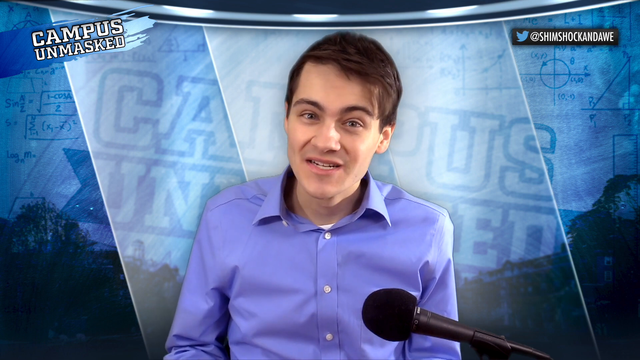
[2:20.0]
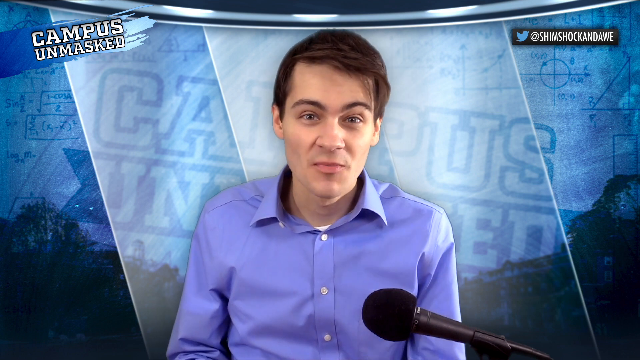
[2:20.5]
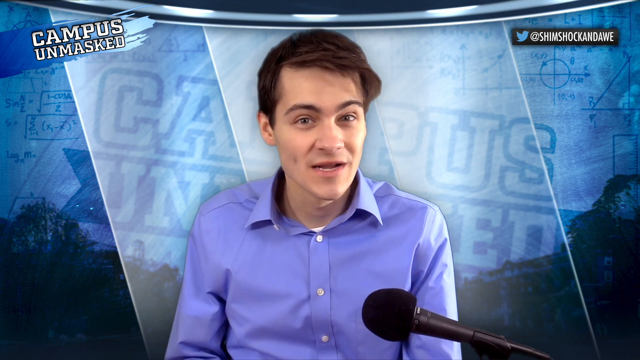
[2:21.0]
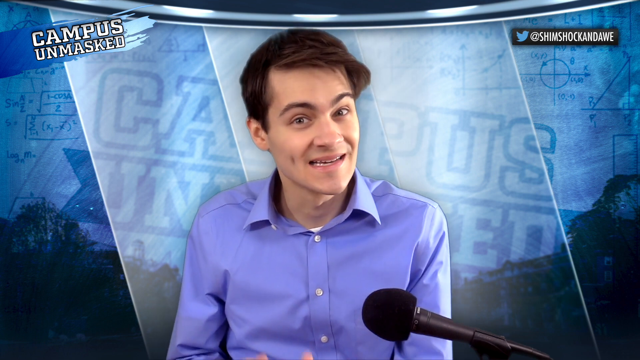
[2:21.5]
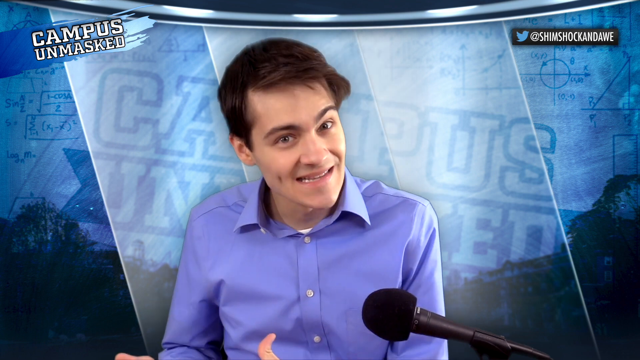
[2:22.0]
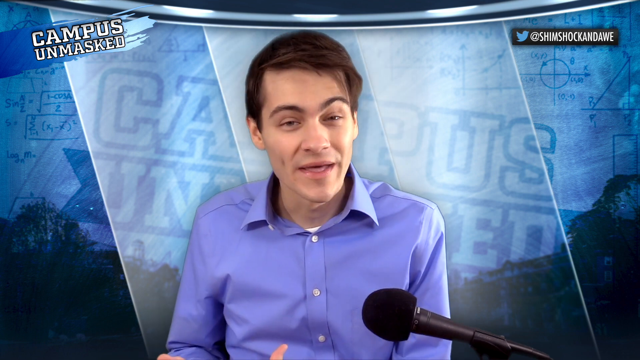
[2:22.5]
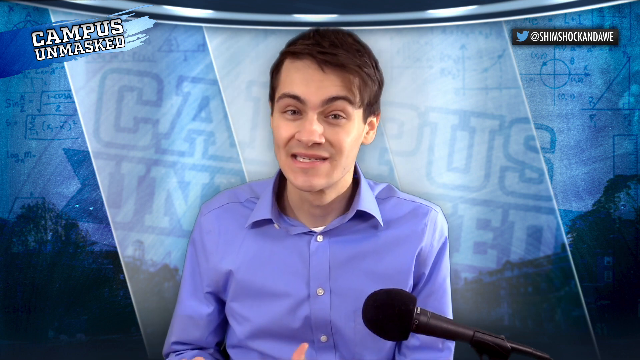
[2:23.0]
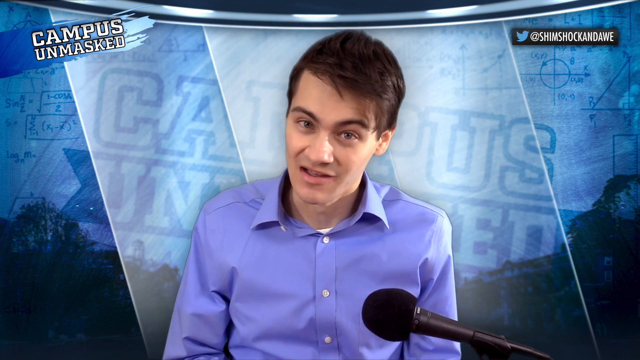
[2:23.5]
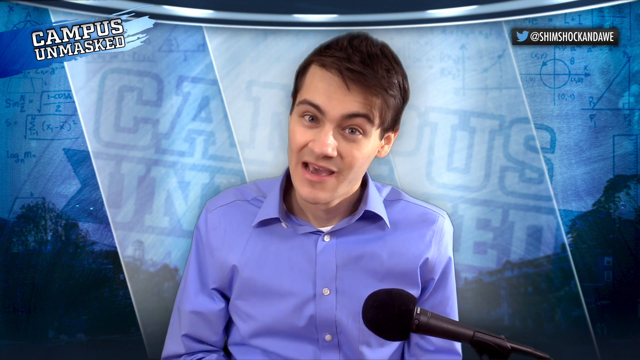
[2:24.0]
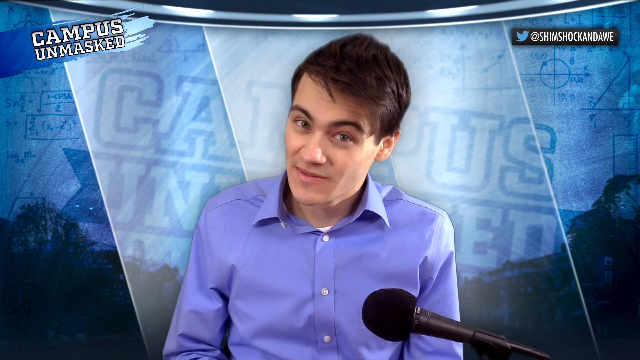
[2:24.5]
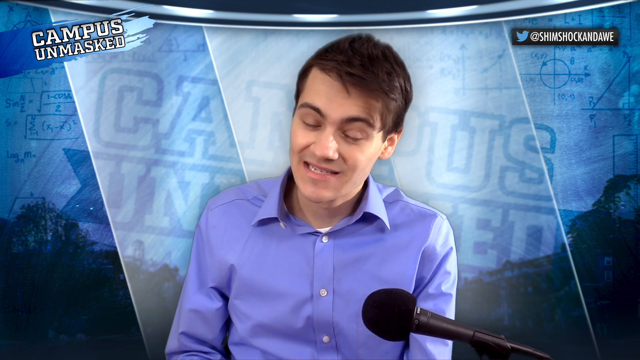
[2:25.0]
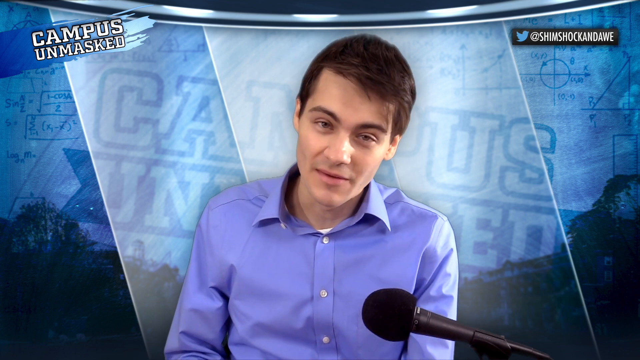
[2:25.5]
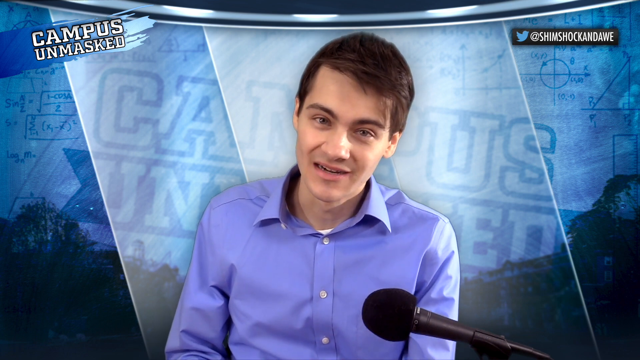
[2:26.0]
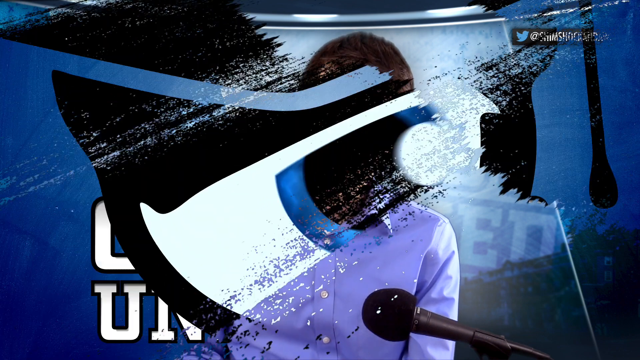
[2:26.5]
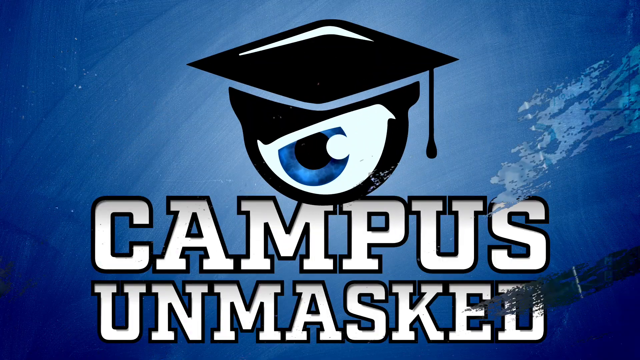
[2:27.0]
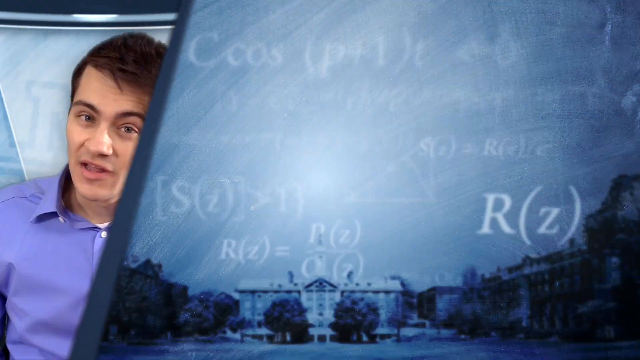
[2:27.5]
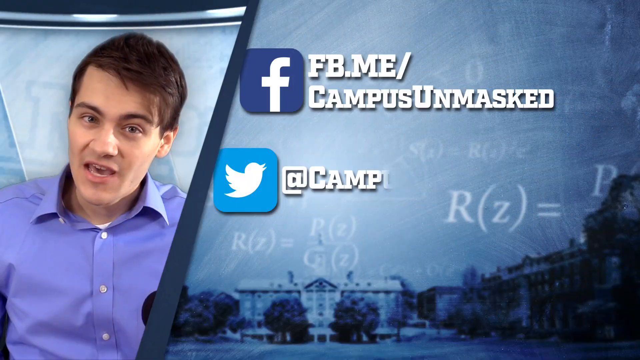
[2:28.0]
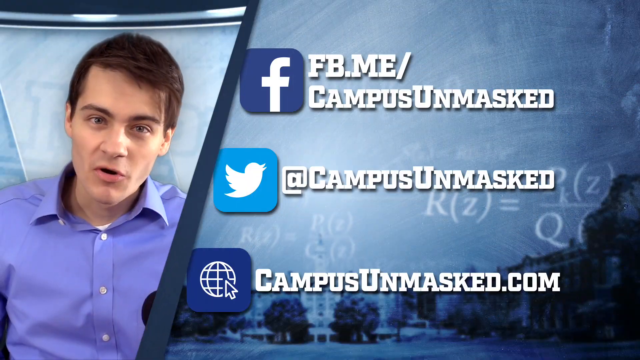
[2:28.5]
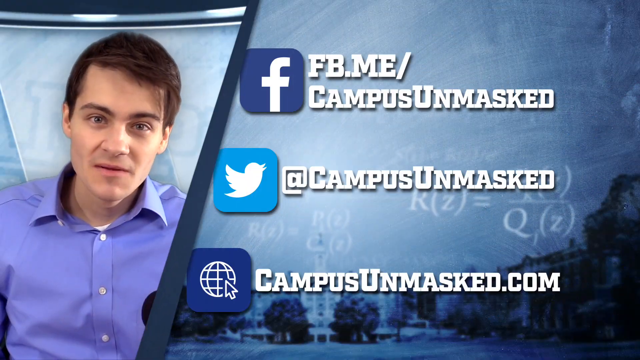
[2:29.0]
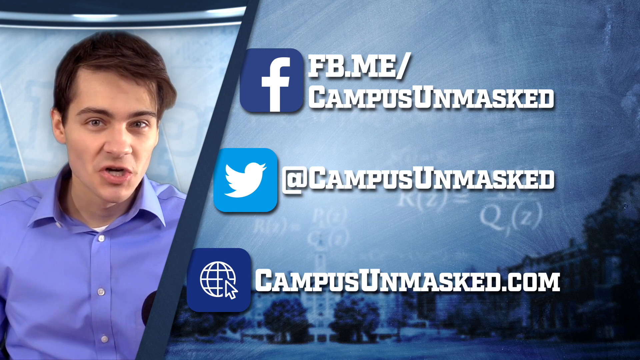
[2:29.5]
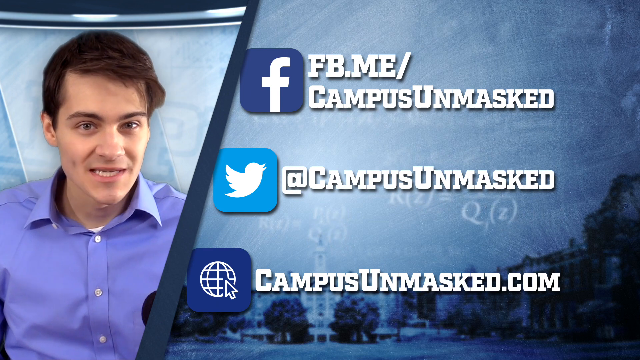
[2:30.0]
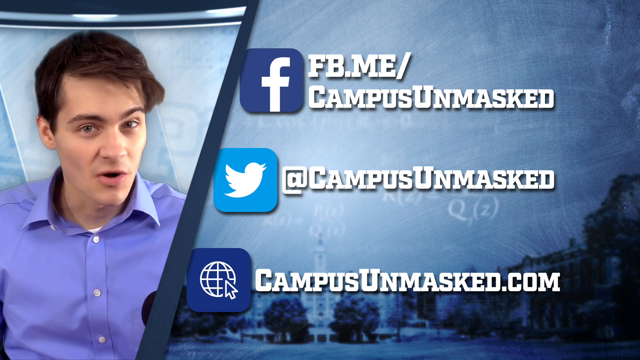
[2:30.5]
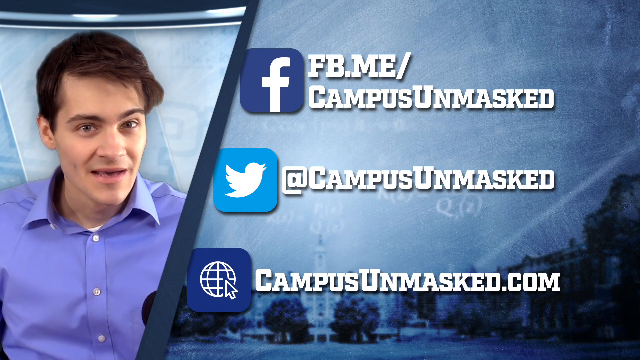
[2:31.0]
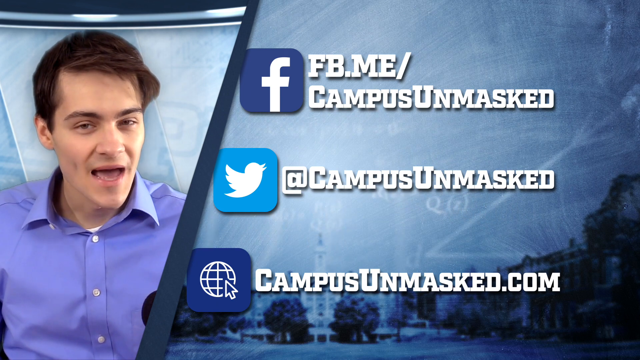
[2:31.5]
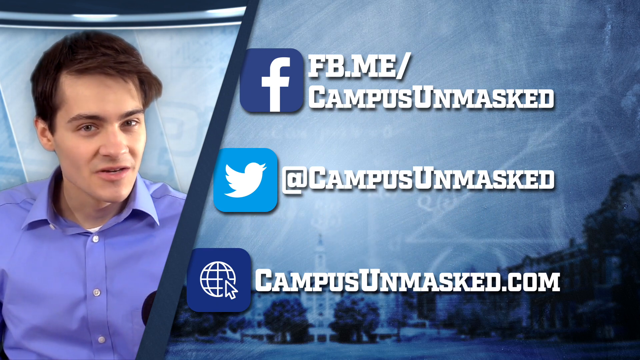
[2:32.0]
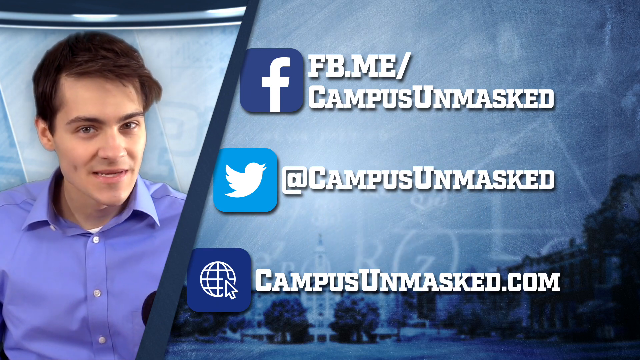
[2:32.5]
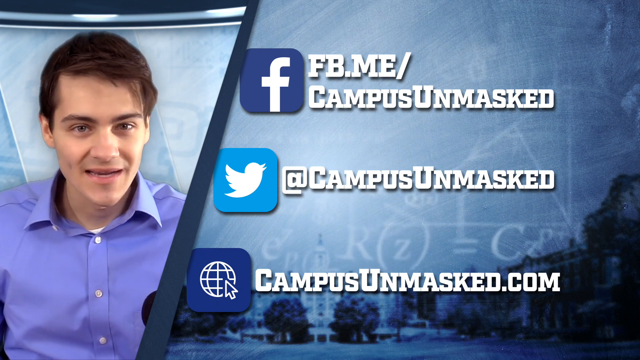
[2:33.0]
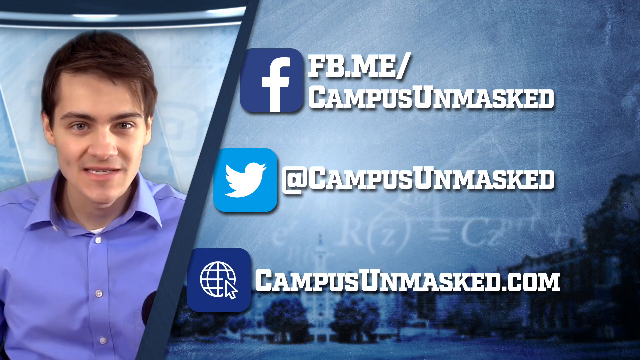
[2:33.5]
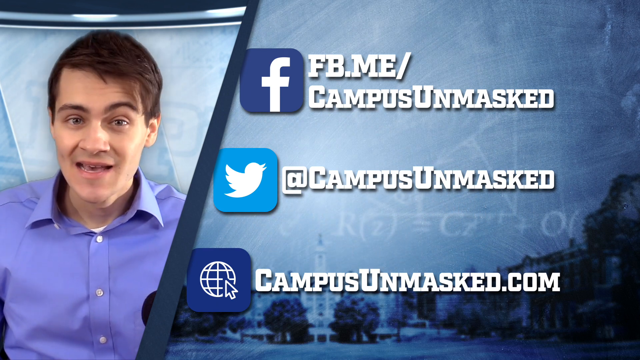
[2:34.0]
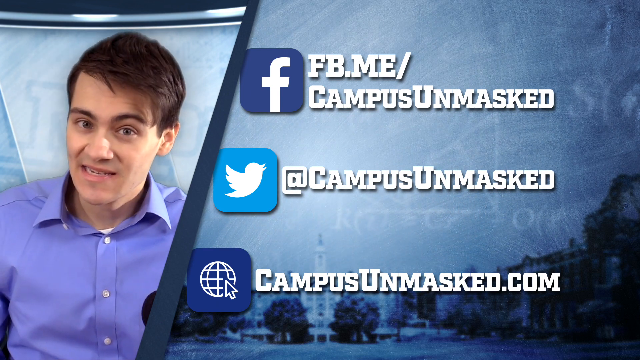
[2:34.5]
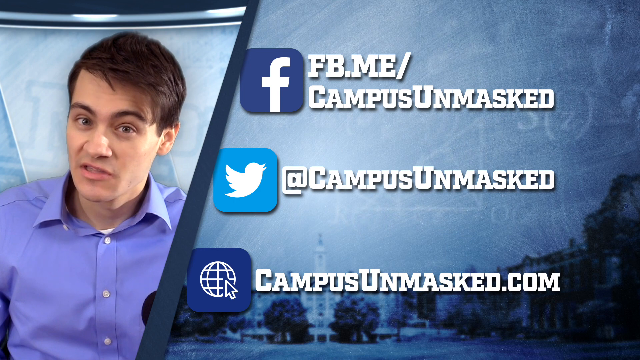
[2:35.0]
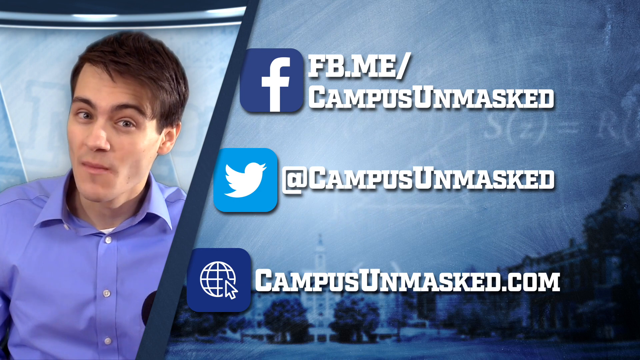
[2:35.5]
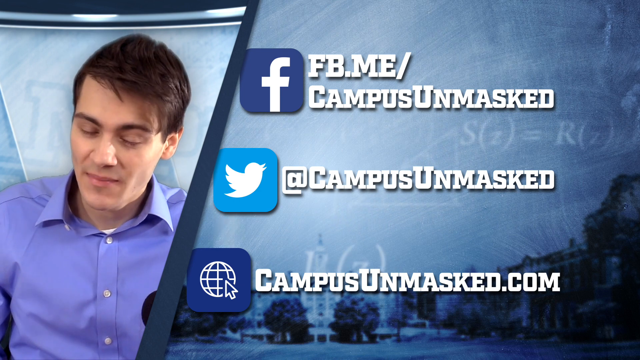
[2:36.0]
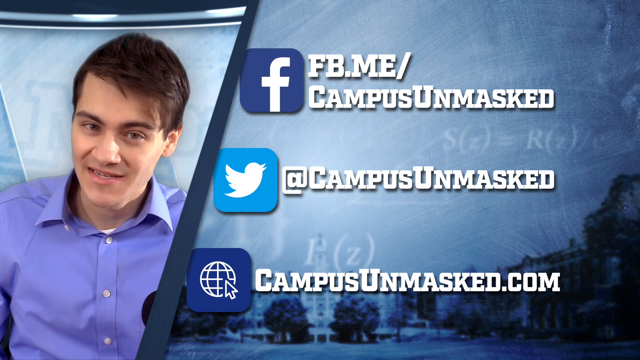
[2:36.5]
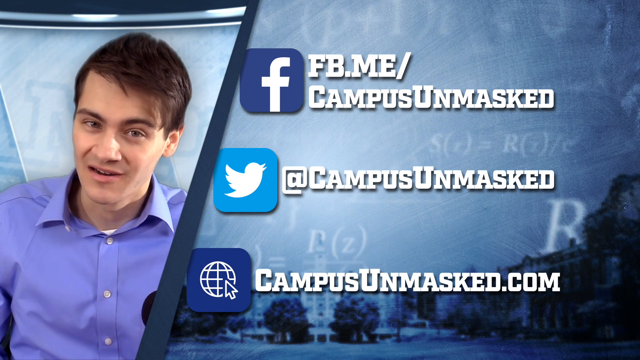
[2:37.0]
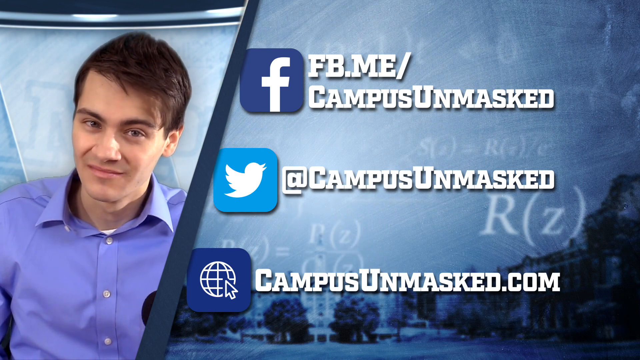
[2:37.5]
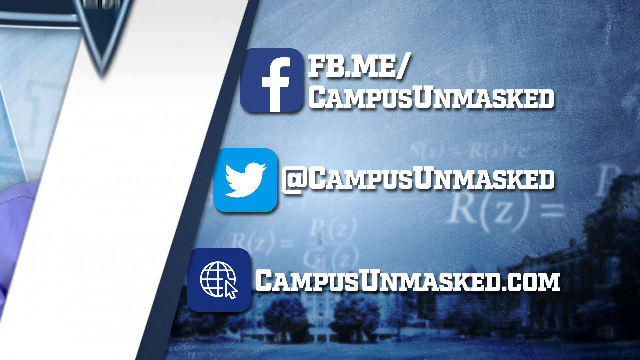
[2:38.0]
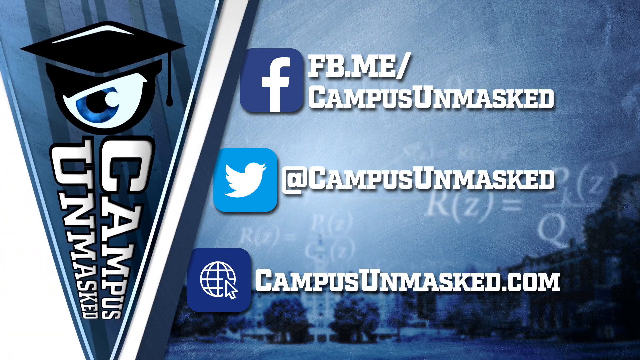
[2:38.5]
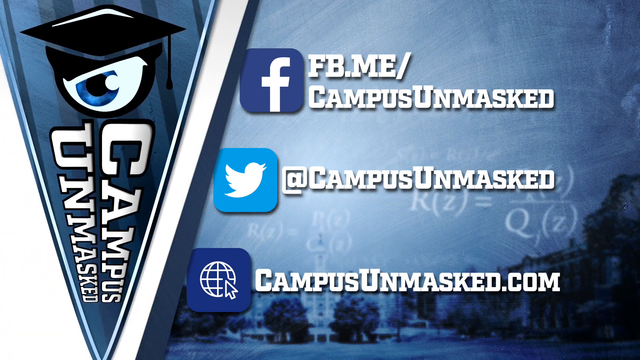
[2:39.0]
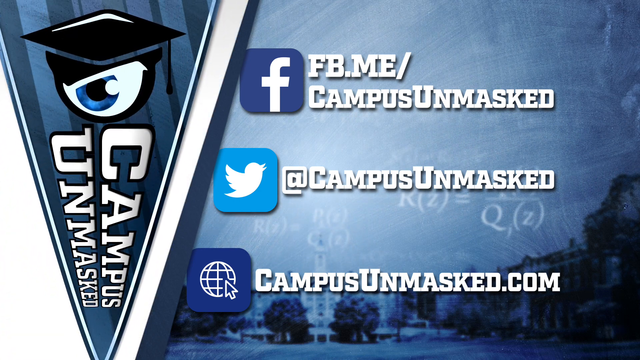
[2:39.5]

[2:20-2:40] The video flashes to Campus Unmasked, possibly with a diagonal switchover. Rob Shimshock talks on the left-hand side, and a diagonal slash on the right-hand side holds web addresses: follow on Facebook "FBME/Campus Unmasked," on Twitter "at Campus Unmasked," or on the web "campusunmasked.com." Then a college banner, a kind of triangular pennant, swoops down from the top of the screen to the bottom.